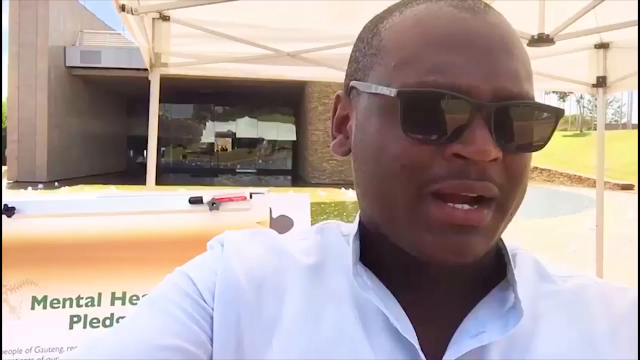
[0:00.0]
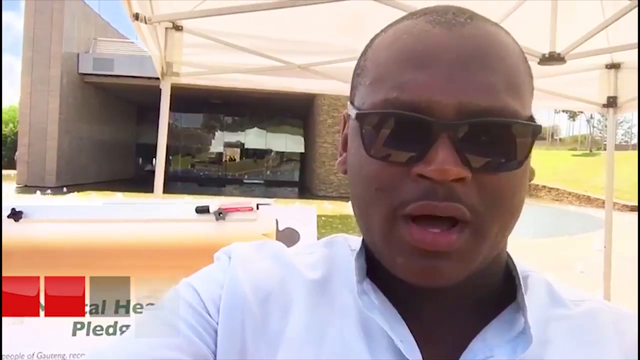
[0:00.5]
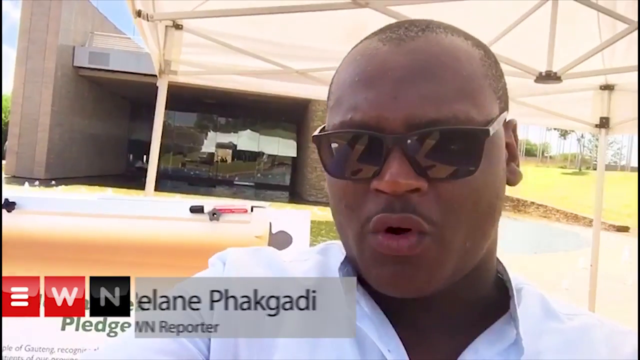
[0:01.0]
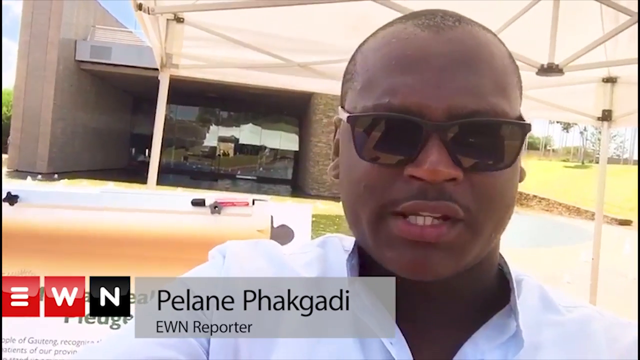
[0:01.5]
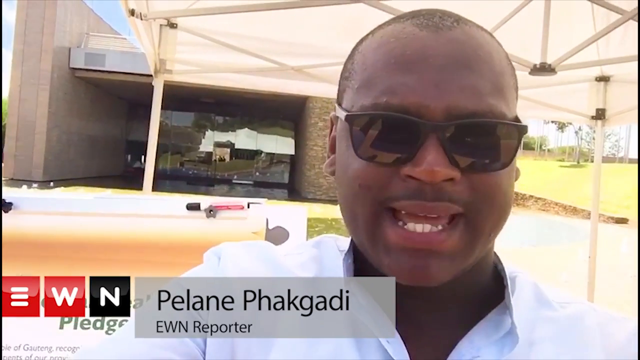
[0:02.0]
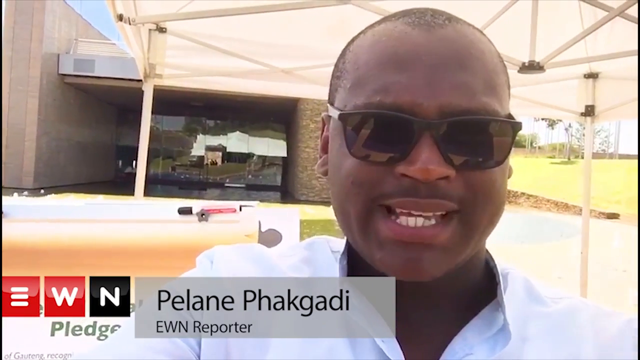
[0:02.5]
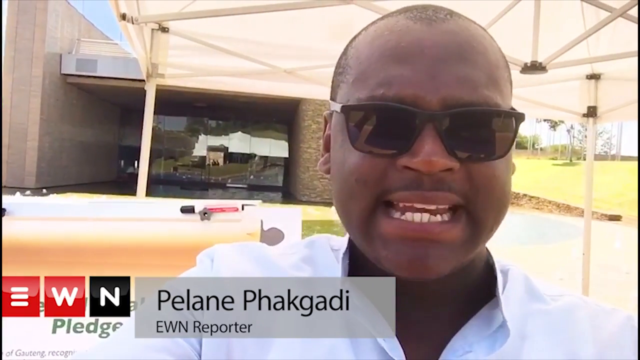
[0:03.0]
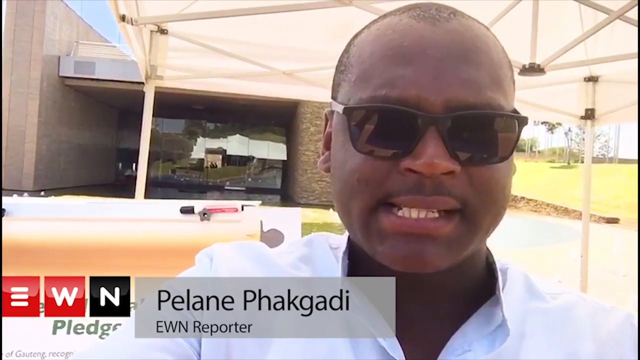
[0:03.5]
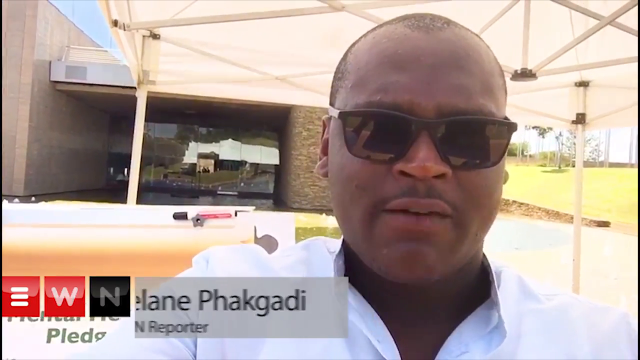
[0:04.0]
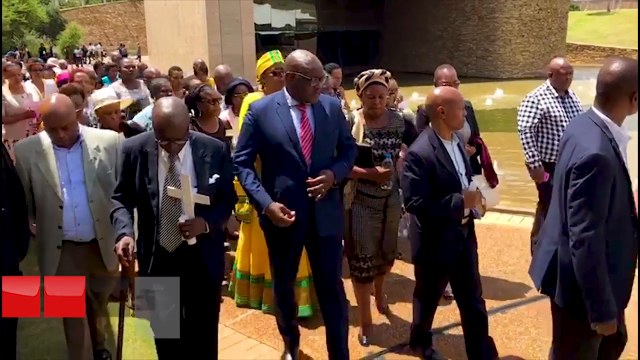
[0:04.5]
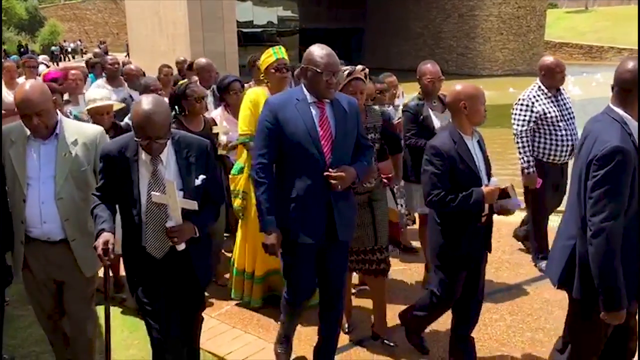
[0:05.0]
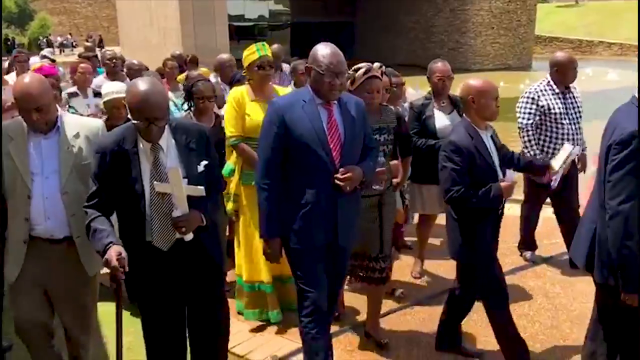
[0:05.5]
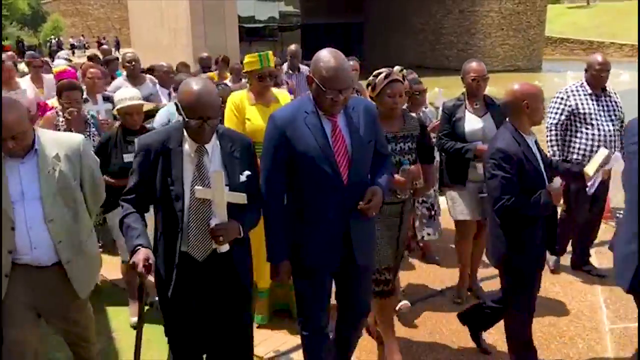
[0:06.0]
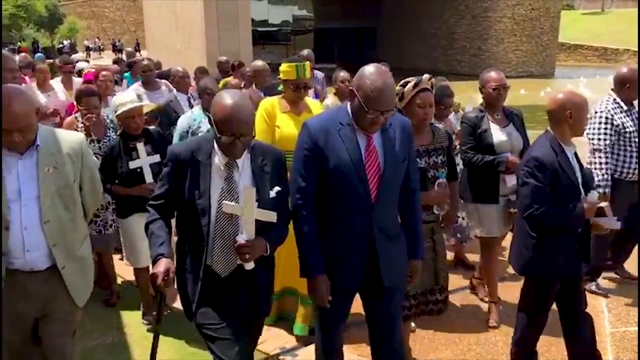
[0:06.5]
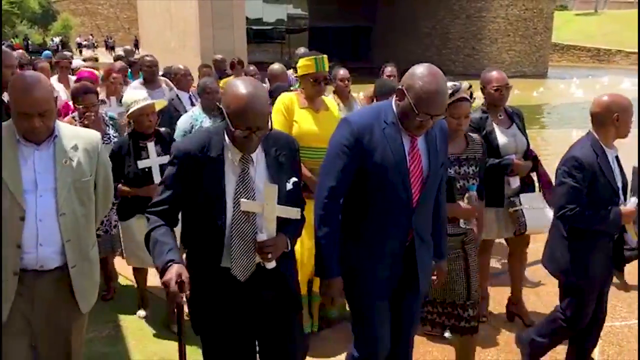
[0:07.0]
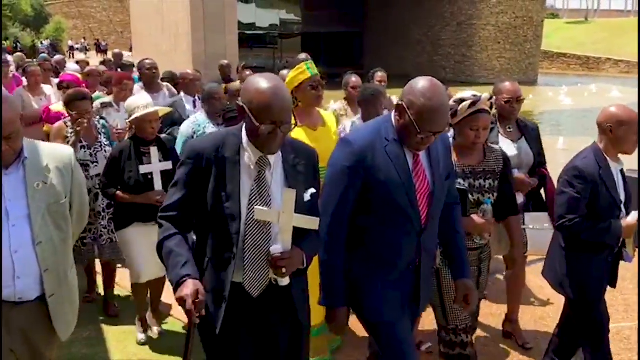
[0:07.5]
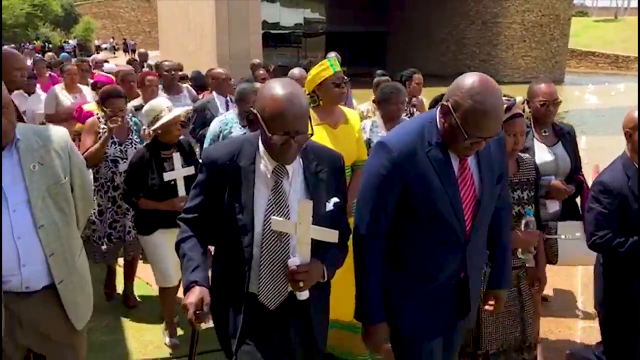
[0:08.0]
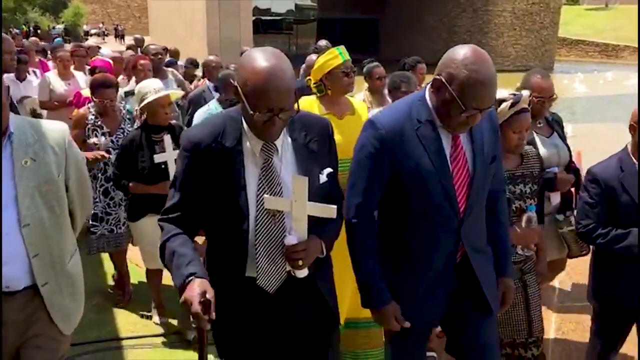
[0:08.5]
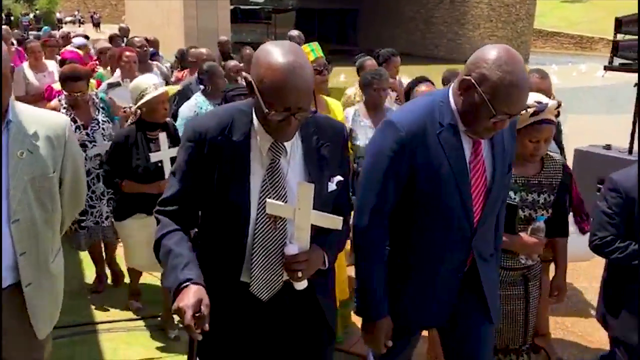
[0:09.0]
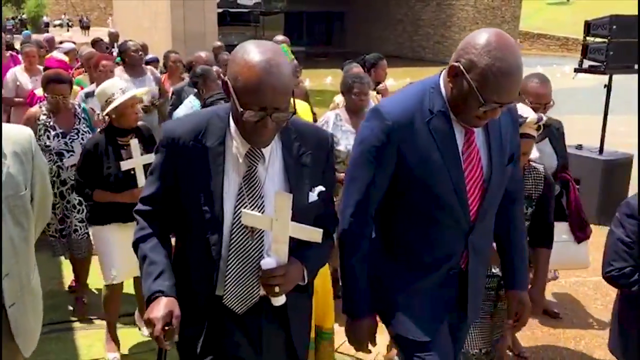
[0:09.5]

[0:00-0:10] A man is talking at the start of the video. He is an African American man wearing sunglasses, and he is outside with a canopy of some sort over him. His name appears to be Pelain Pagadi. Next, a group of people walks along, at least a couple of them carrying crosses. They are all dressed up: the men wear suits and the women wear dressy clothes. As far as can be seen, all of the people are African American. A building of some sort is in the background, and it is daytime.